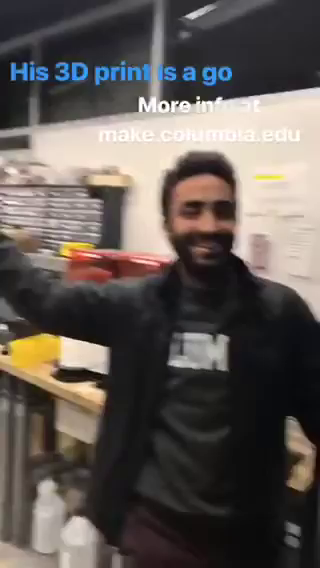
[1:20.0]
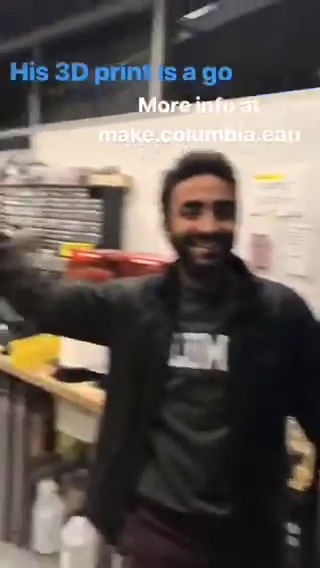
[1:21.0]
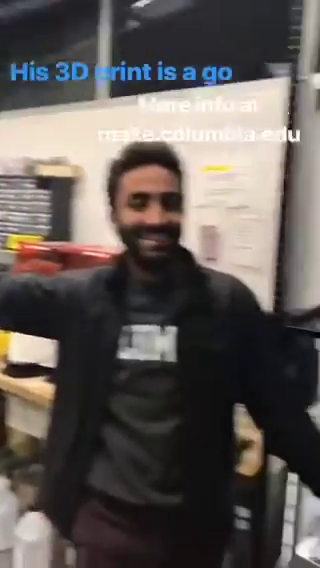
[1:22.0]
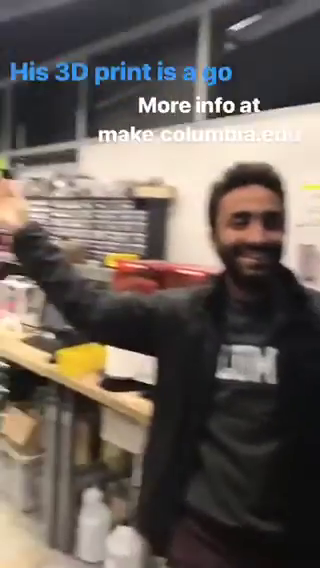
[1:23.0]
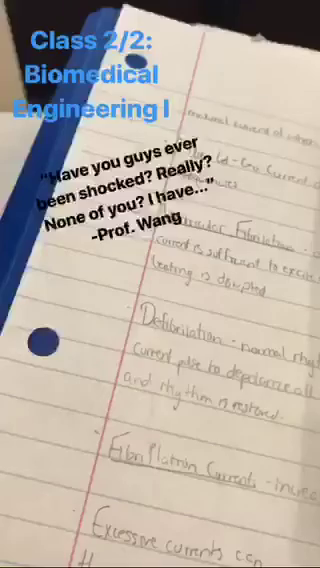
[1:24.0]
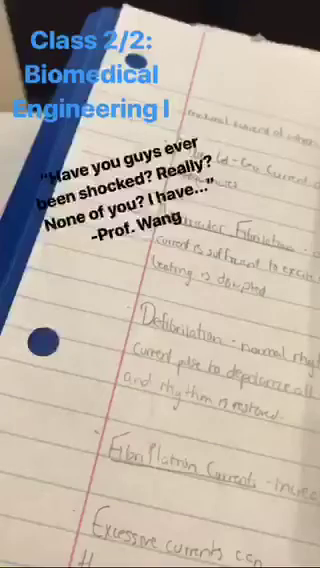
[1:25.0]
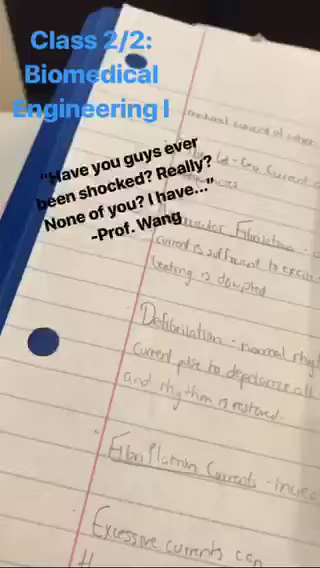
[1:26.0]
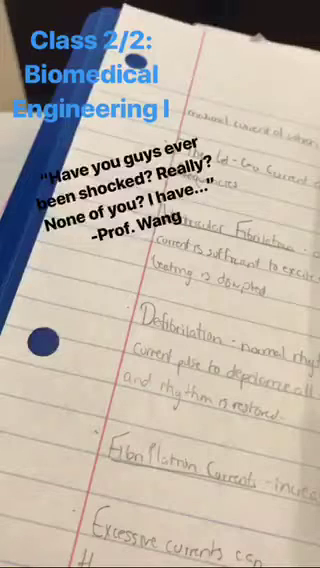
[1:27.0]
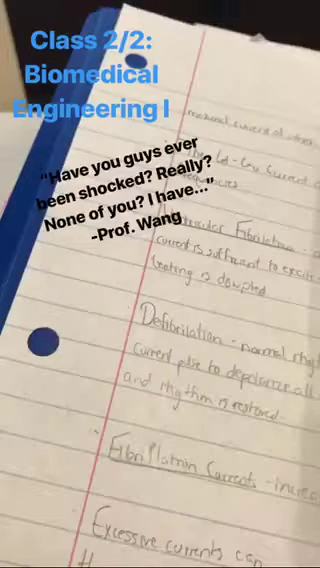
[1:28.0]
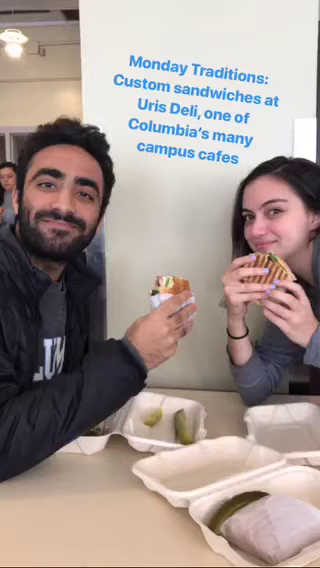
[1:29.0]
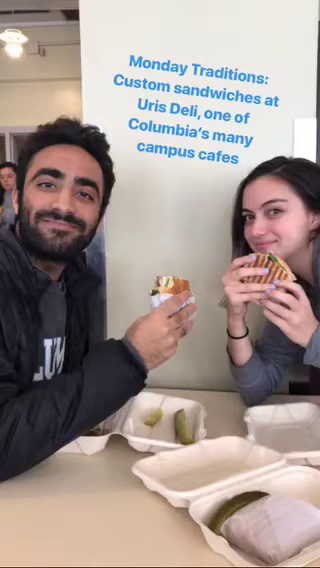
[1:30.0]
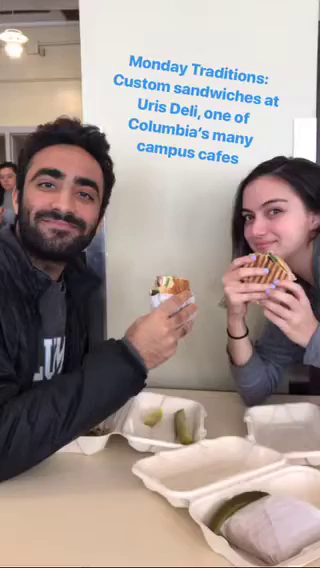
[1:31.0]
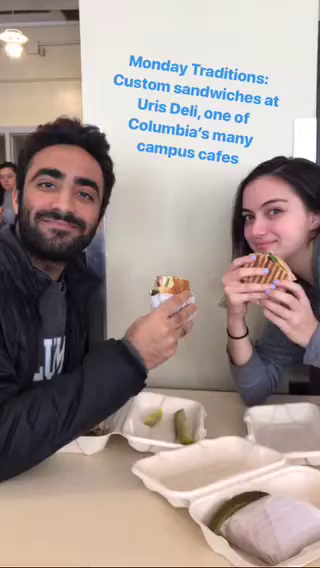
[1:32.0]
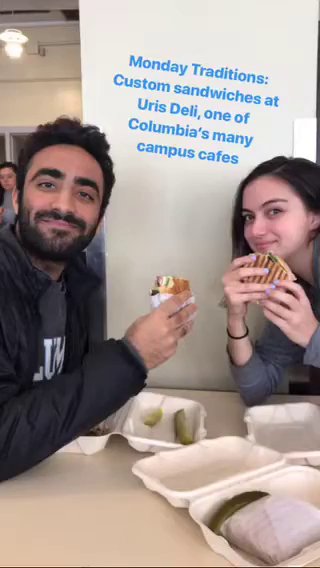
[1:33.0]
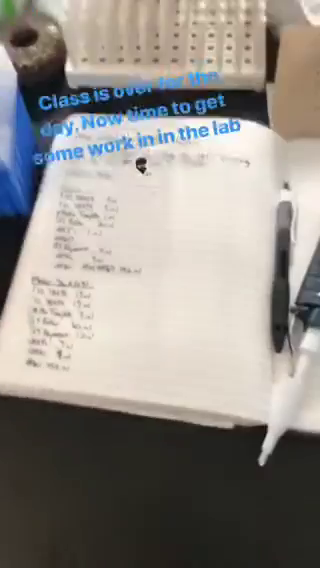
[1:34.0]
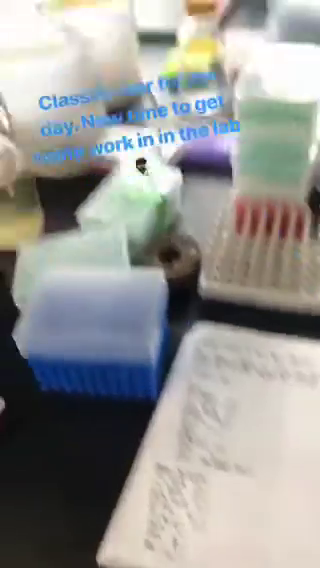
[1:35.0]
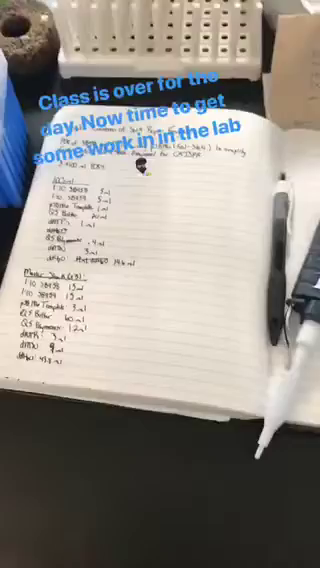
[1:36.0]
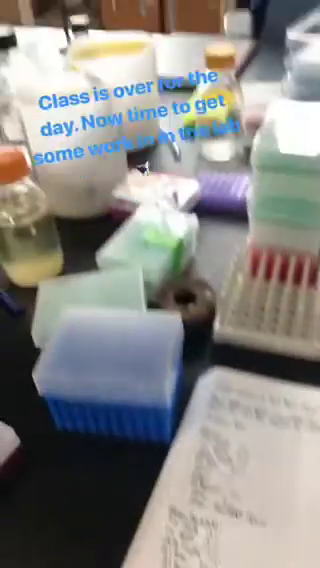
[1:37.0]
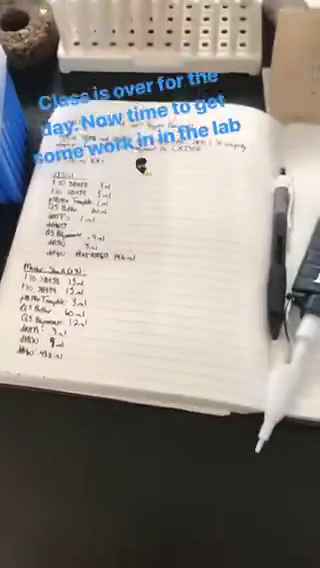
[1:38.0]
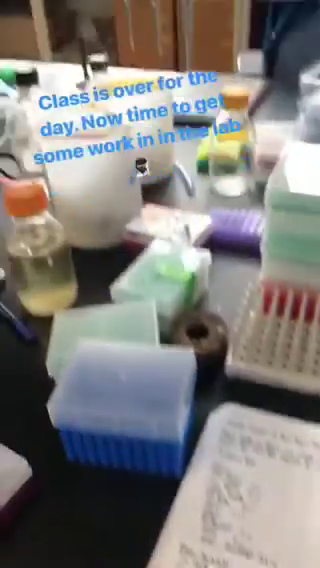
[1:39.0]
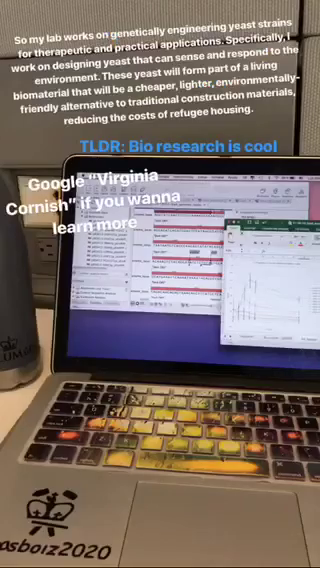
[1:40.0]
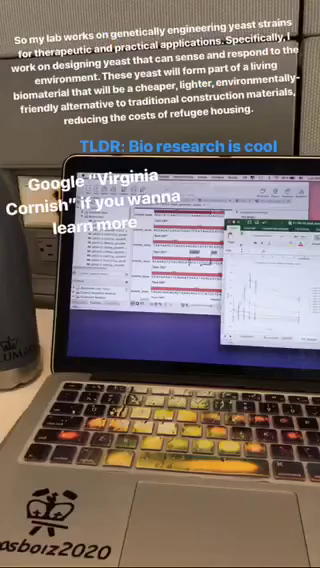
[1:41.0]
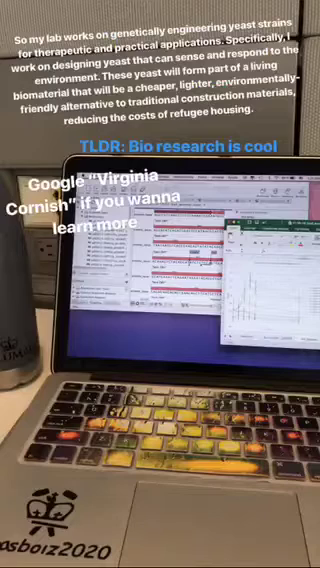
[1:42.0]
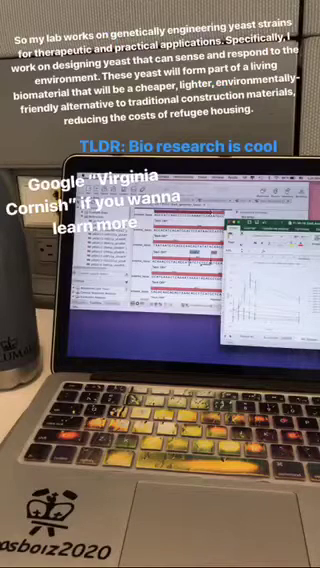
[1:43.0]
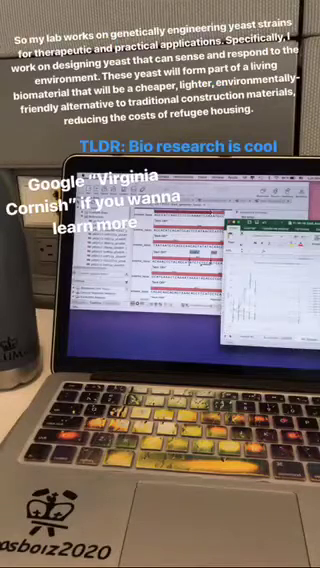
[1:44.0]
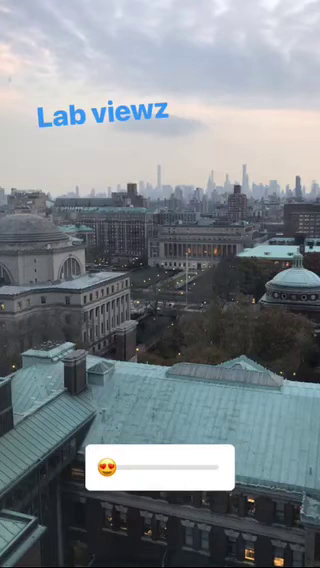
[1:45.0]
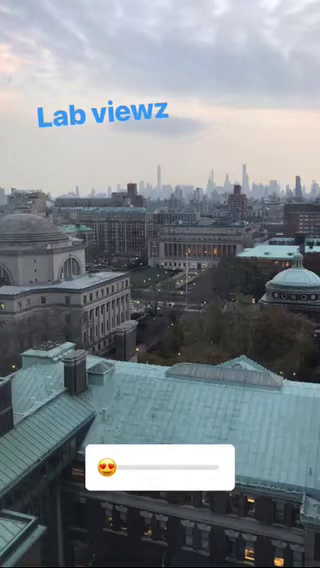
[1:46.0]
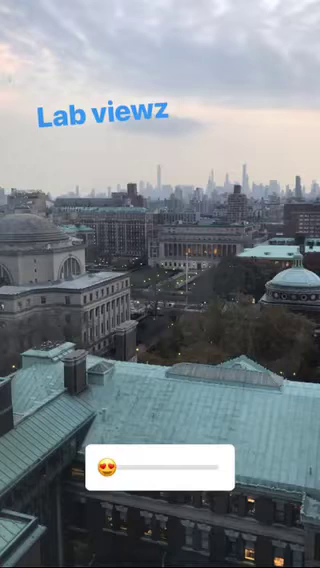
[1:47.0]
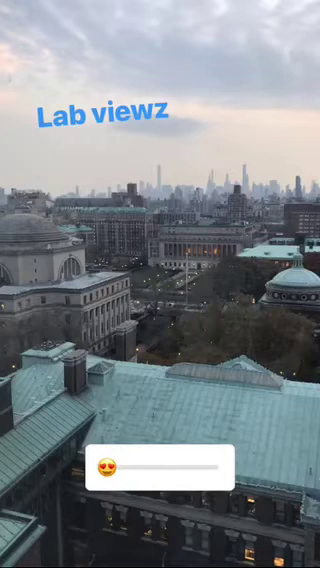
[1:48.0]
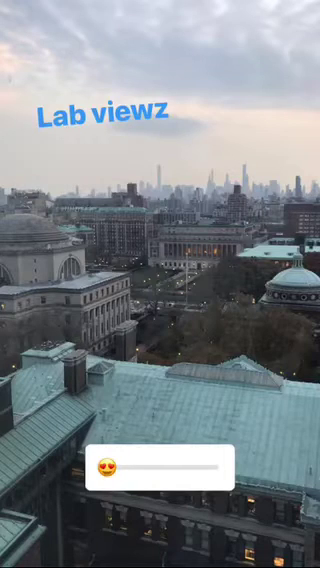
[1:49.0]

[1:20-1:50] The scene changes, with text reading "his 3D prints is a goal. More info on make Columbia agile." A white man with a black beard and black hair raises his hand. He is in a building that looks like a class or a library. He wears a black jacket and a black t-shirt with white writing on the front, and he looks to be in his early forties. The video stops and skips forward and back, and a page with writing on paper pops up, with black ink on the right side. An overlay reads "have you guys ever been shocked? Really? None of you? I have, from one". Beneath, there is also a paper, and two people appear, one on the left and one on the right. The person on the right is a white woman holding a sandwich in her hands. On the left, the man with the black beard, black hair, black jacket and black t-shirt with white writing on the front smiles into the camera.